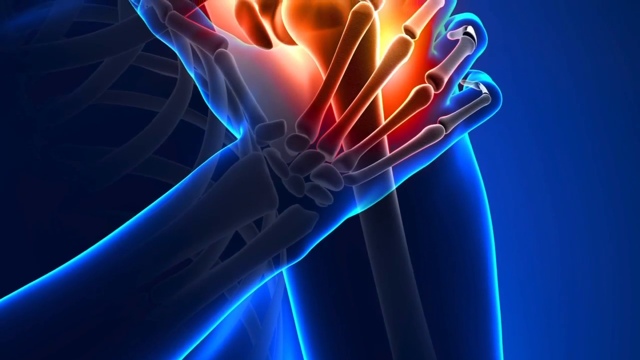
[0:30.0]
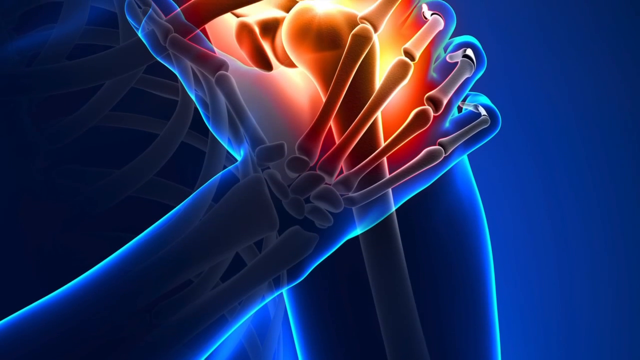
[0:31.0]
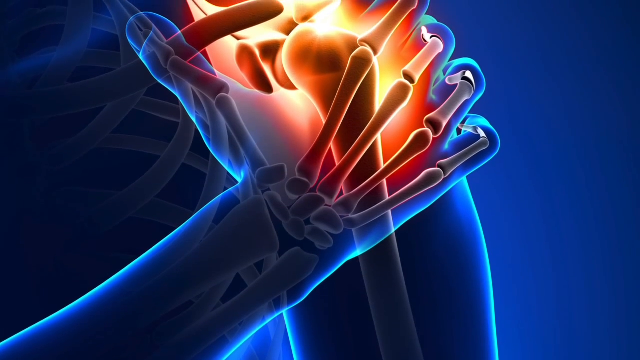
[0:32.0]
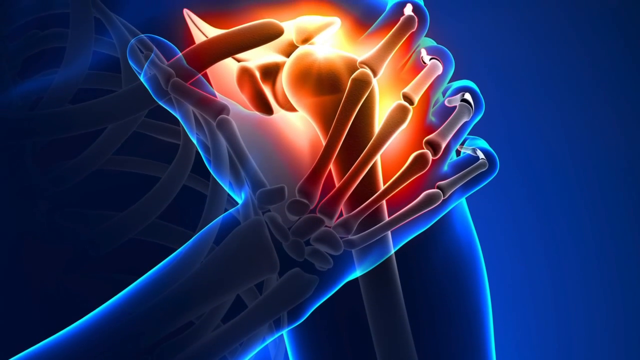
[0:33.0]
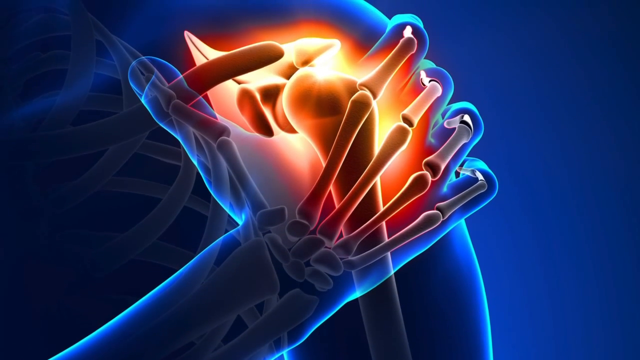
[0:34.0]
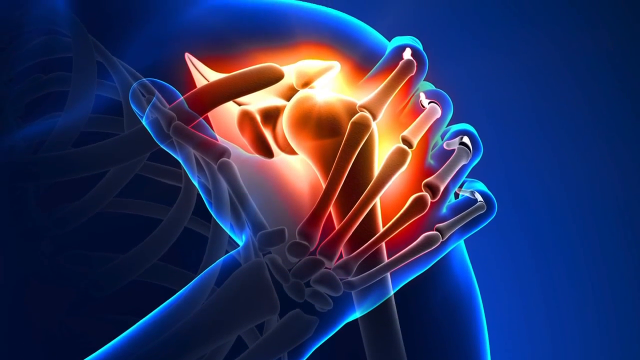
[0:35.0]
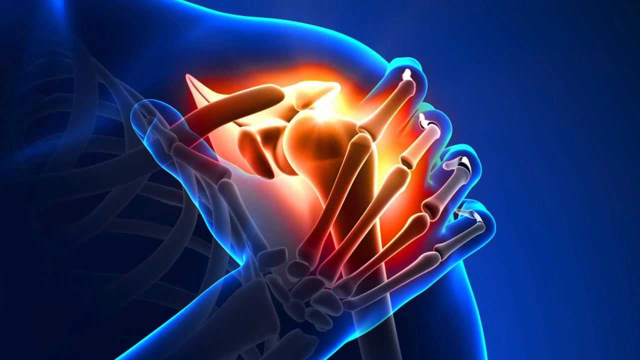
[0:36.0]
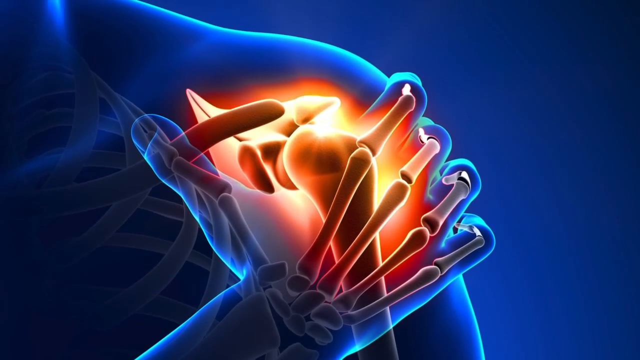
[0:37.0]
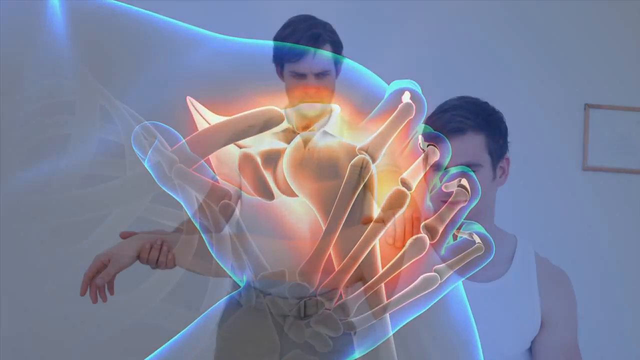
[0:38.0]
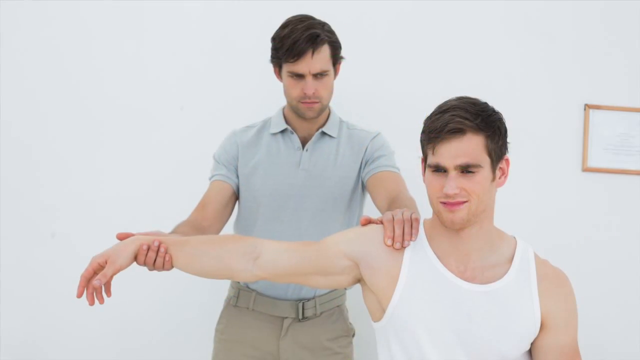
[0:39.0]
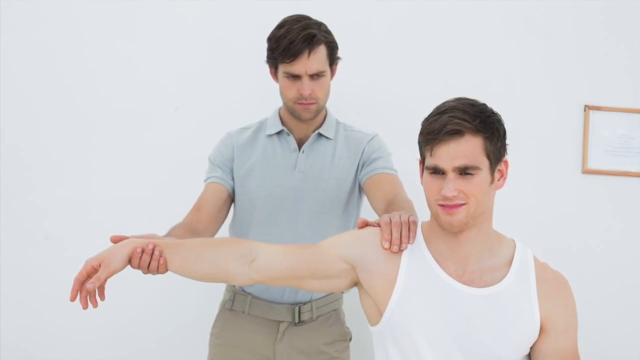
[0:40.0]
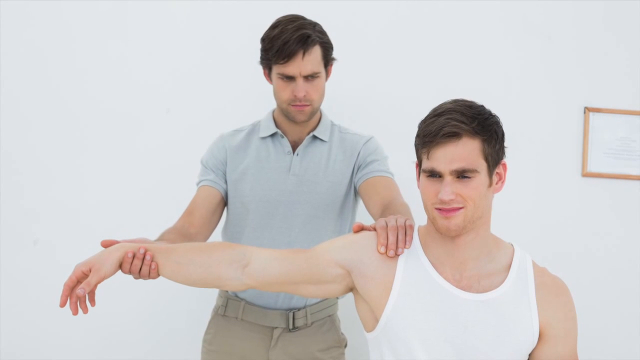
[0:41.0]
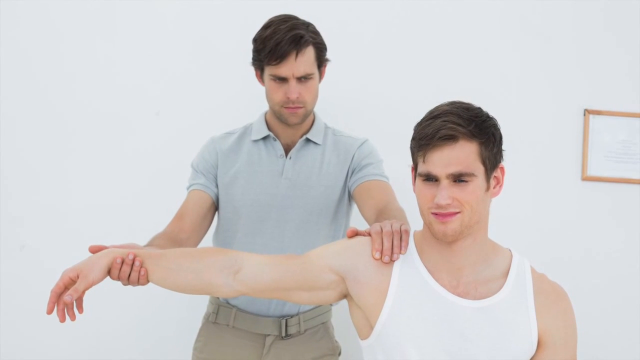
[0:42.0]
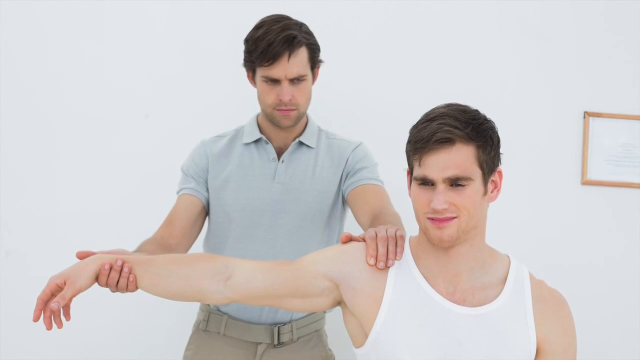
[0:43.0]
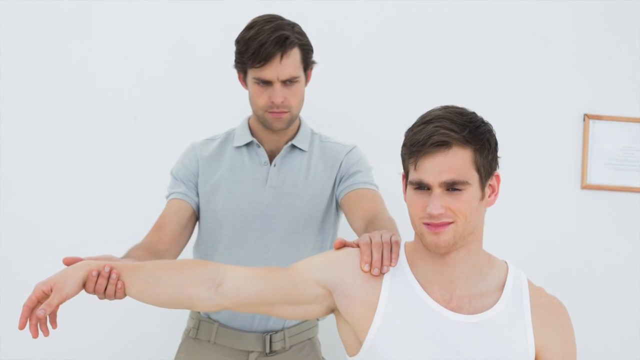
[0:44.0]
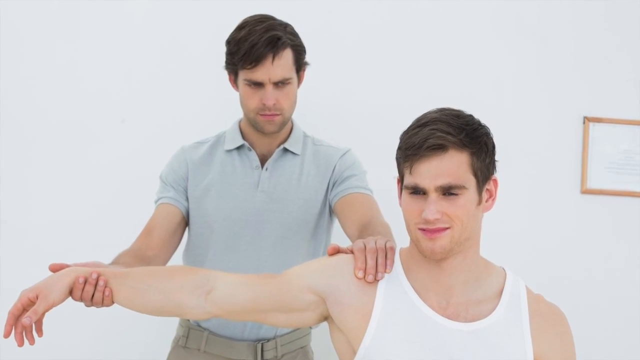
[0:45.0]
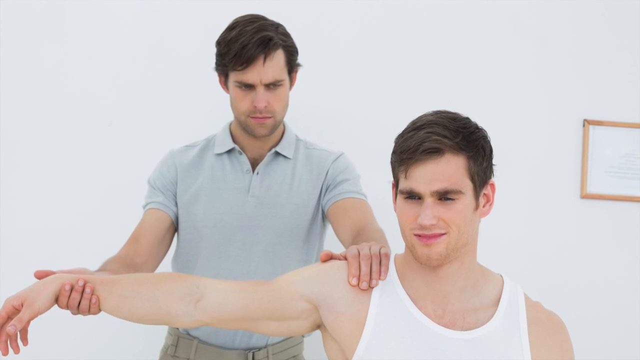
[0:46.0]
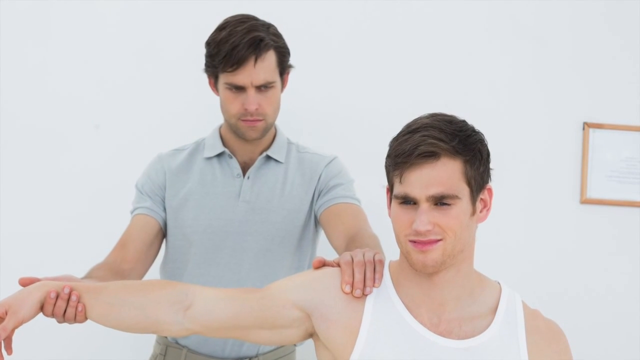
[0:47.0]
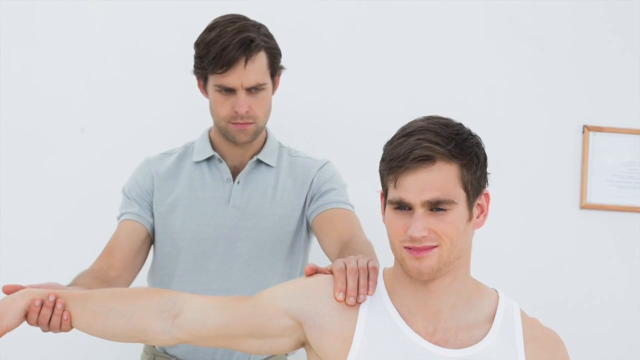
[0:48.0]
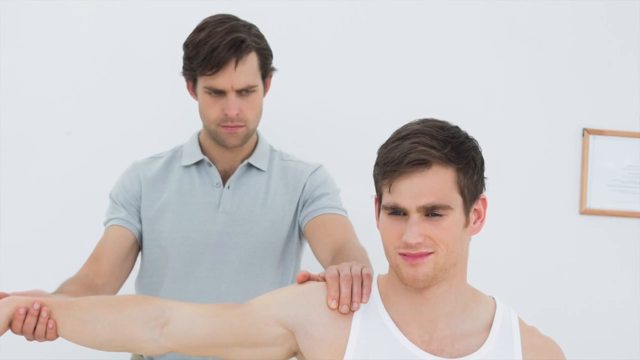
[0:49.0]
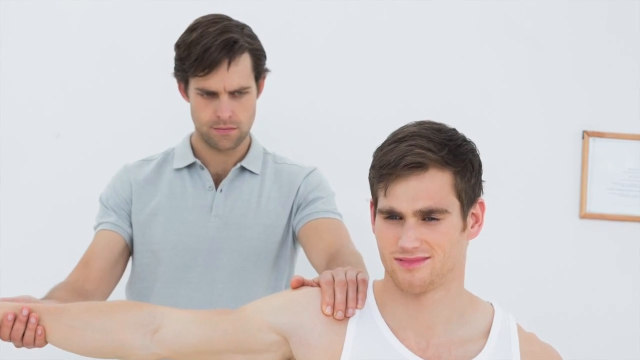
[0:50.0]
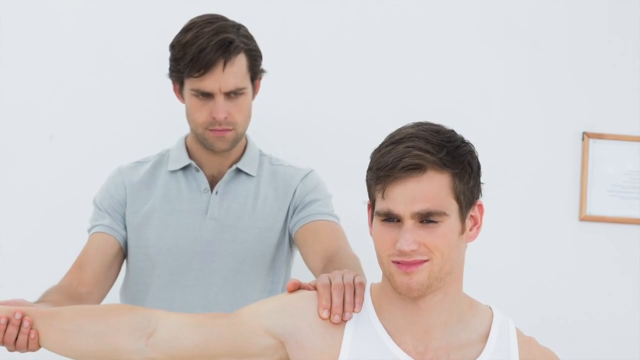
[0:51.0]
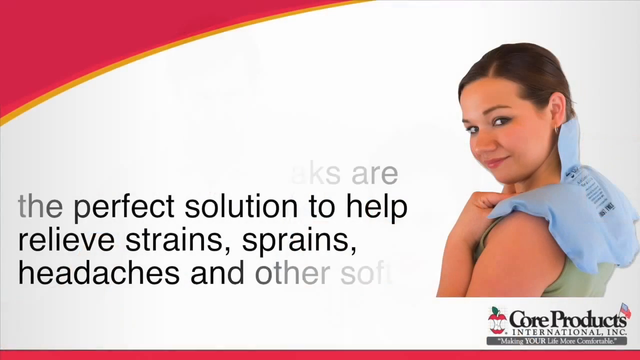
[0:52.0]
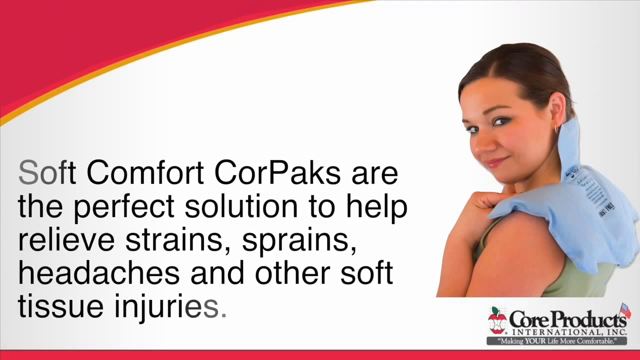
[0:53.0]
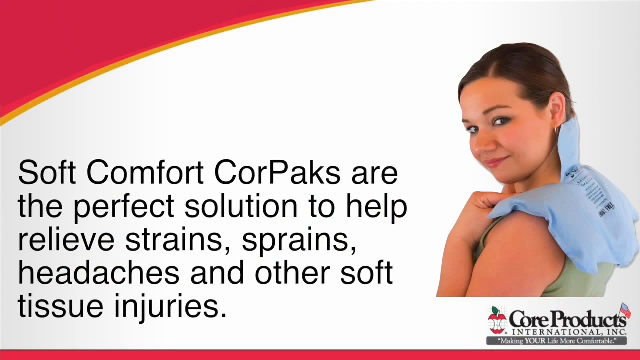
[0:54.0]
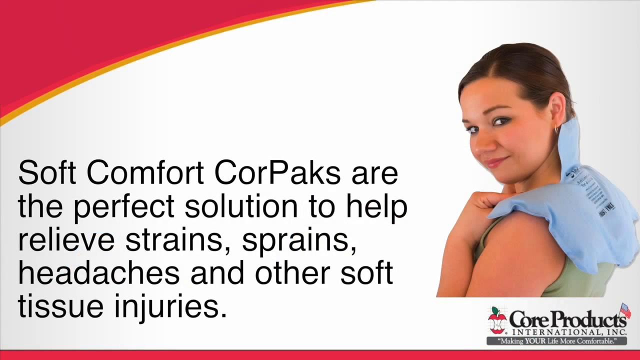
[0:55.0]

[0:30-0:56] A bright view of what looks to be the skeletal system shows what looks like a hand holding on to the top part of the shoulder. It is mostly blue around the body, while the area where the shoulder is being held is more of an orangish red with some bright yellow. The video then shows a still image of what looks to be two men in a white room; one man is standing behind the other and is holding out the front man's arm, pulling it up to where it meets the shoulder. Then a woman appears holding what looks to be an ice pack on her shoulder, and the screen says "Soft comfort core packs are the perfect solution to help relieve strains, sprains, headaches, and other soft tissue injuries."